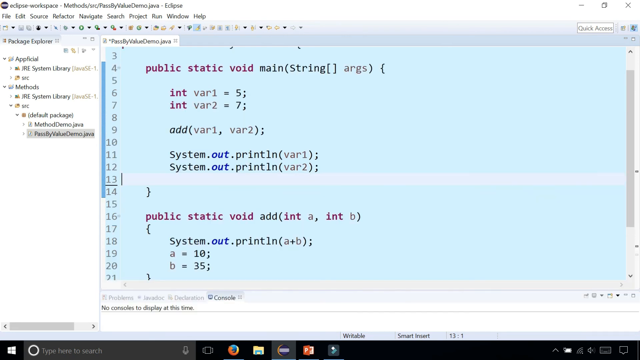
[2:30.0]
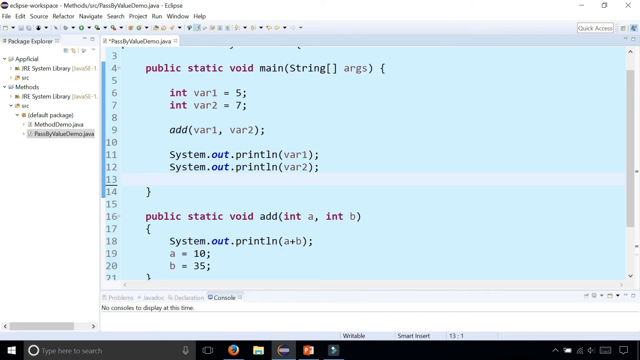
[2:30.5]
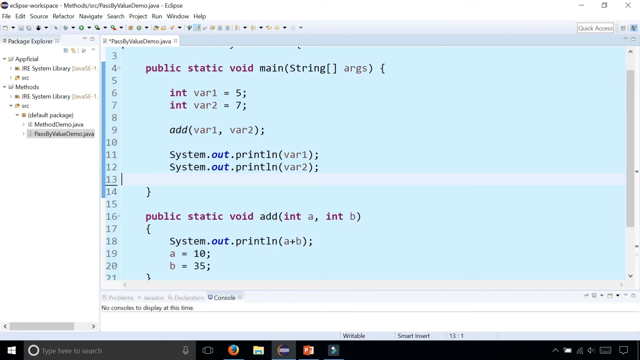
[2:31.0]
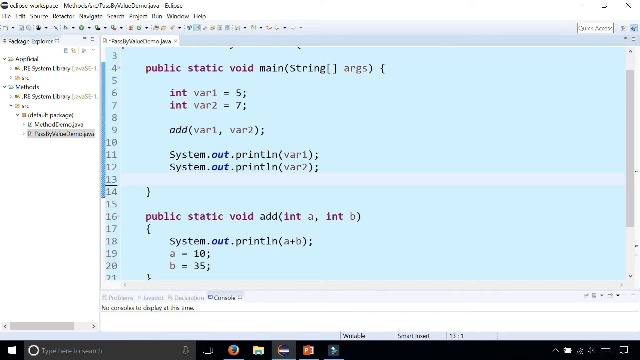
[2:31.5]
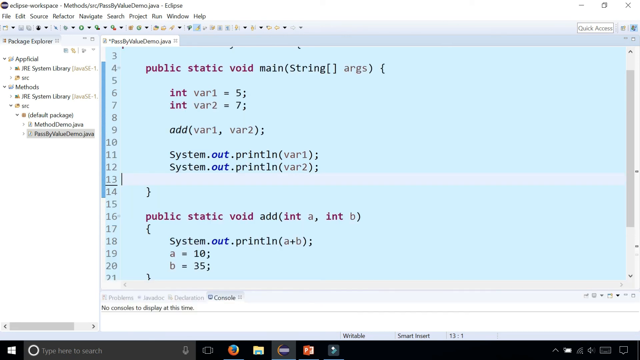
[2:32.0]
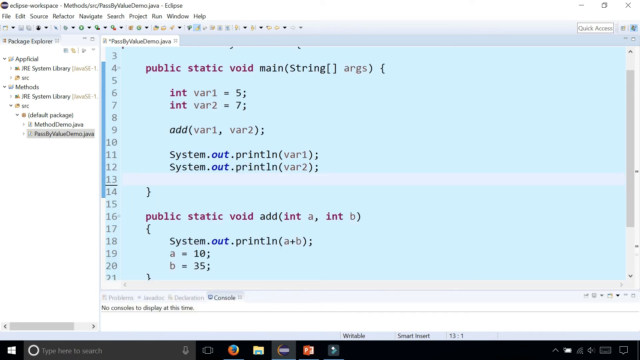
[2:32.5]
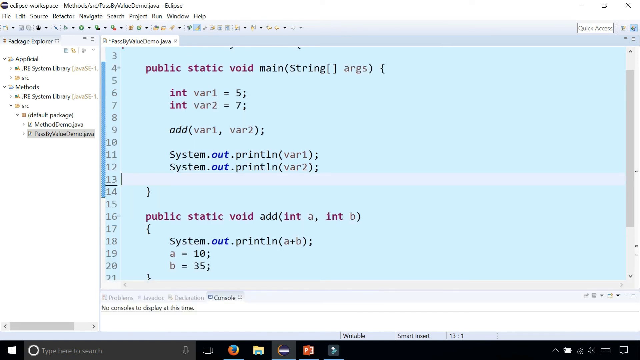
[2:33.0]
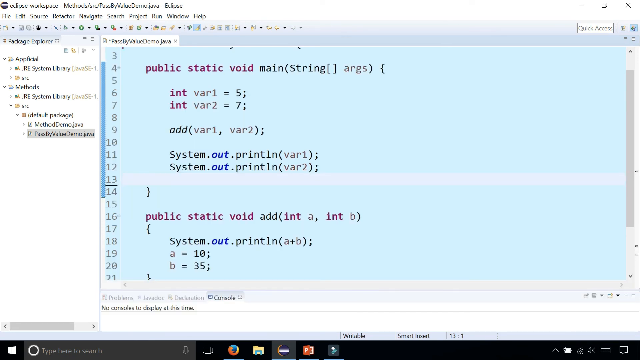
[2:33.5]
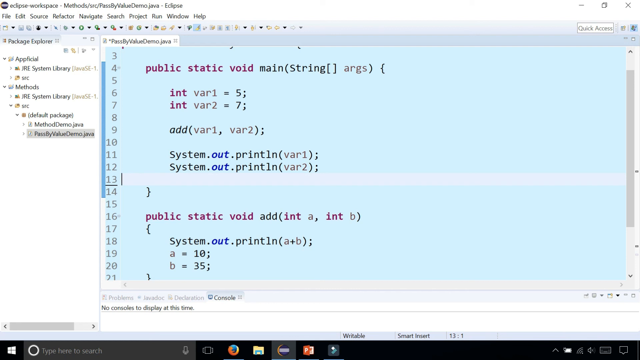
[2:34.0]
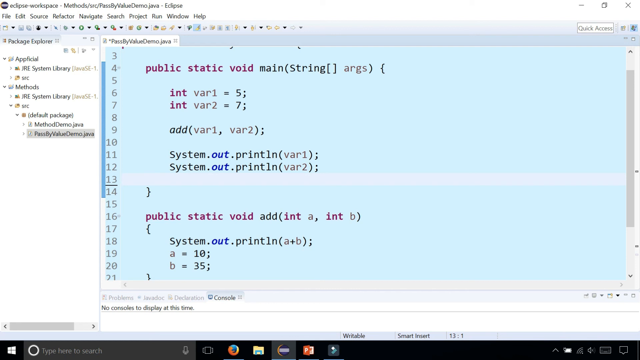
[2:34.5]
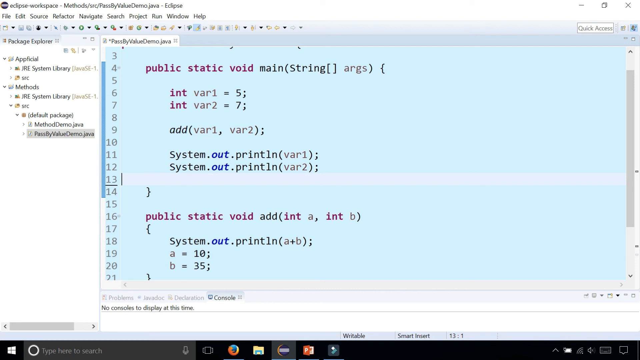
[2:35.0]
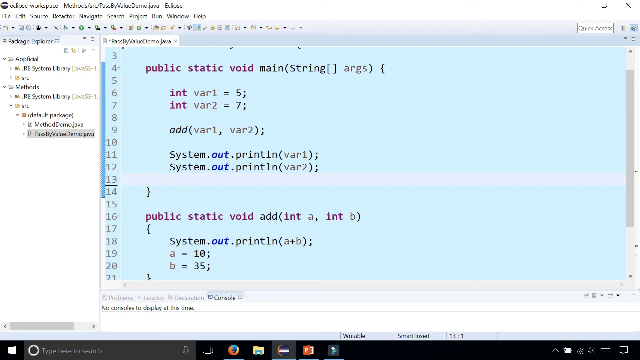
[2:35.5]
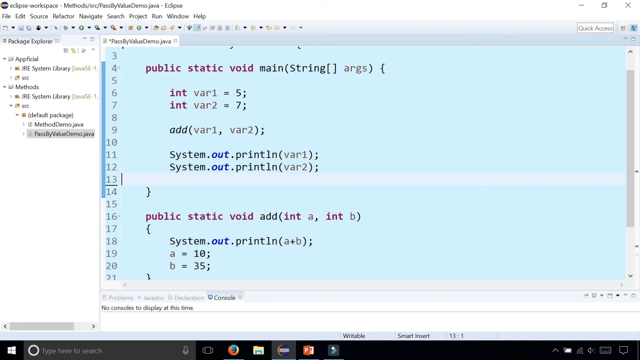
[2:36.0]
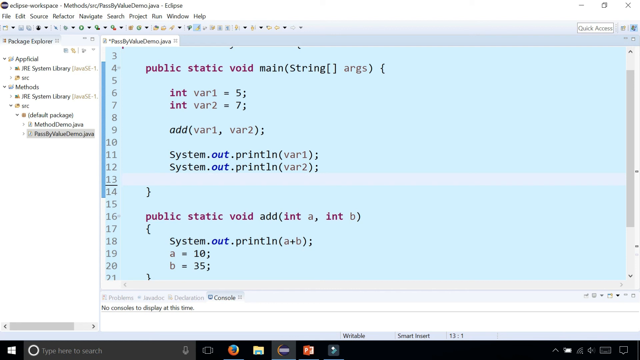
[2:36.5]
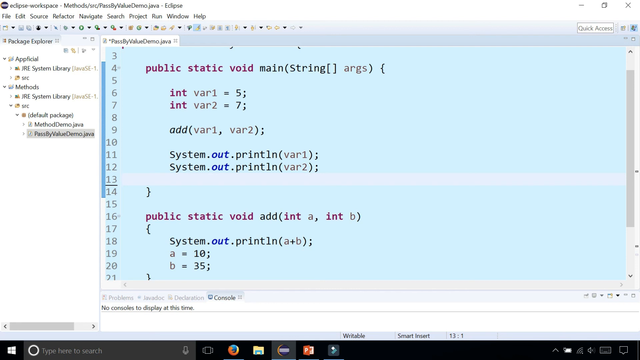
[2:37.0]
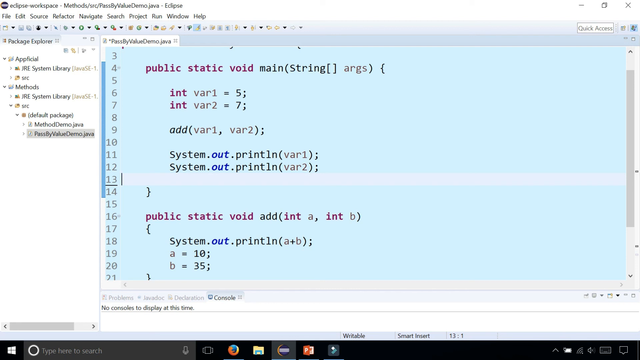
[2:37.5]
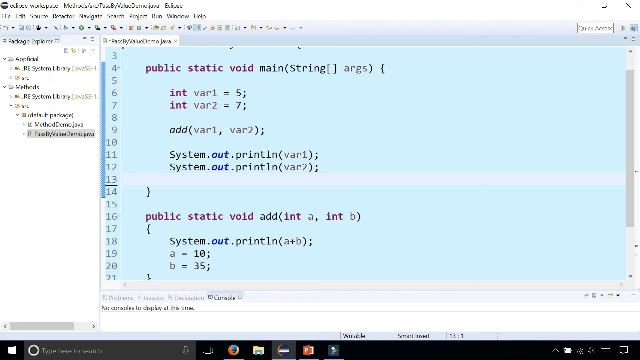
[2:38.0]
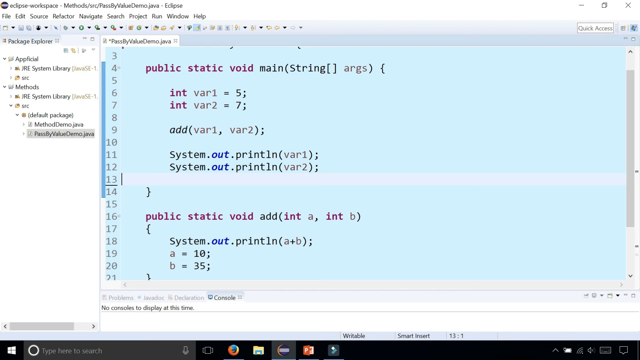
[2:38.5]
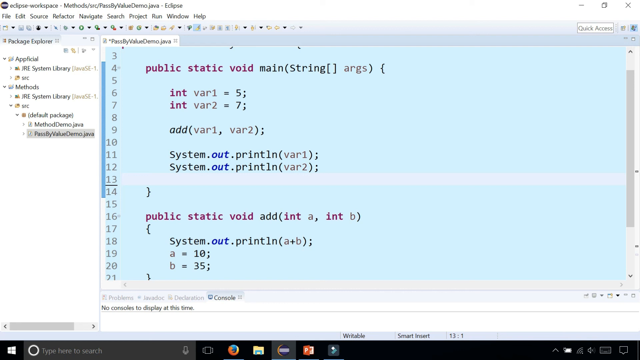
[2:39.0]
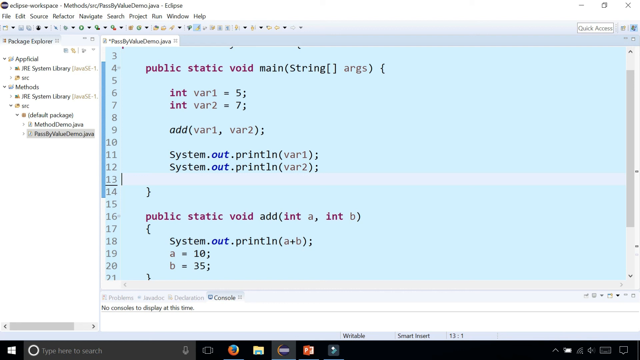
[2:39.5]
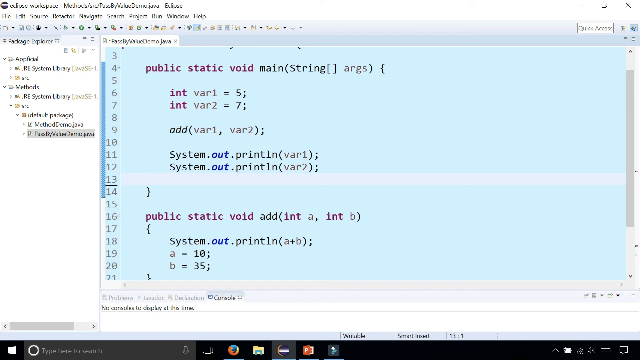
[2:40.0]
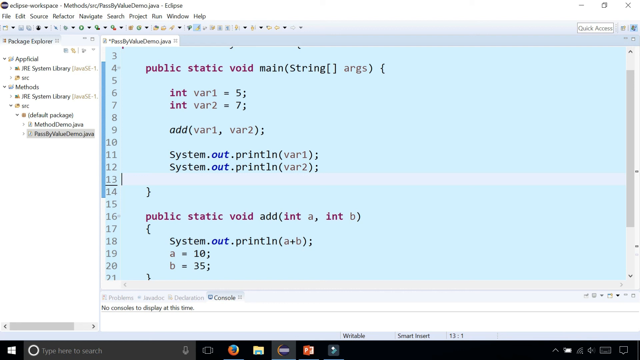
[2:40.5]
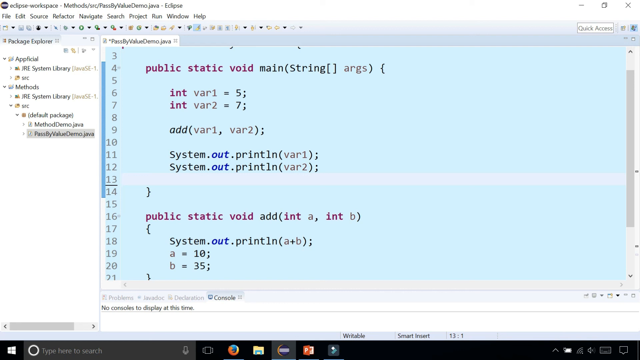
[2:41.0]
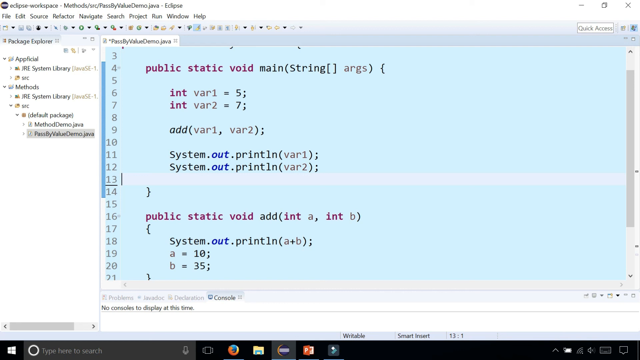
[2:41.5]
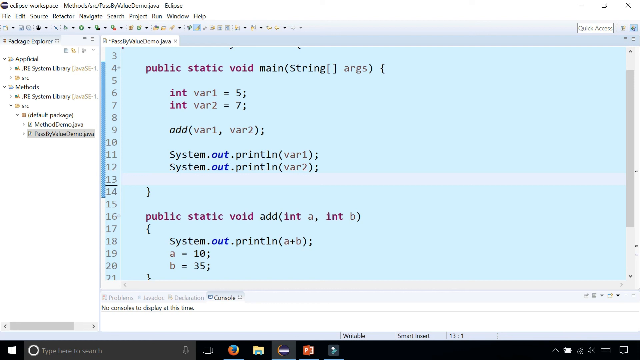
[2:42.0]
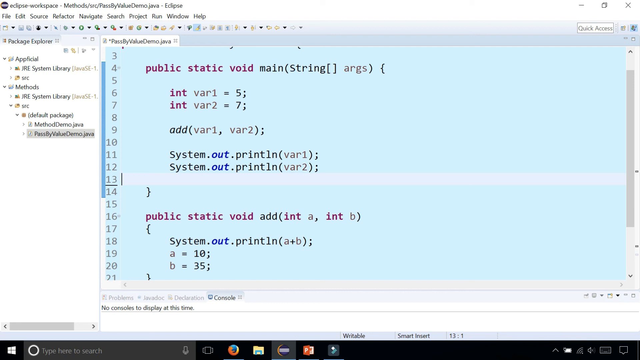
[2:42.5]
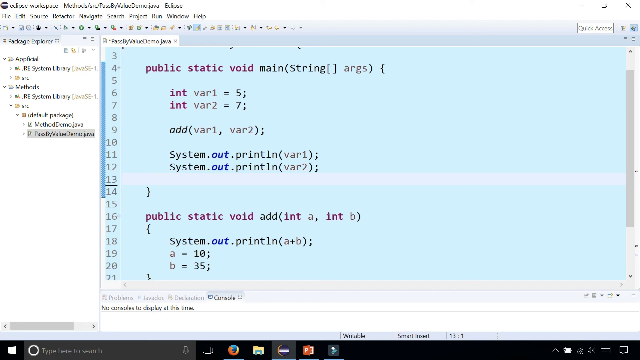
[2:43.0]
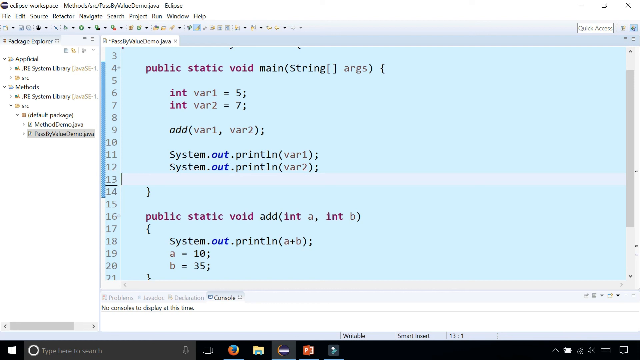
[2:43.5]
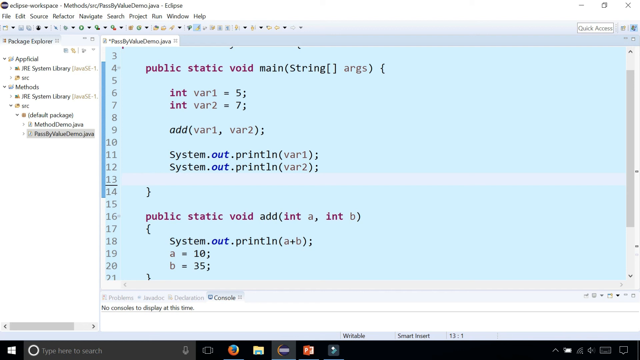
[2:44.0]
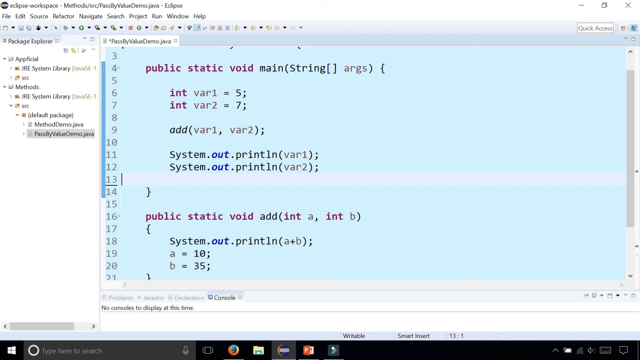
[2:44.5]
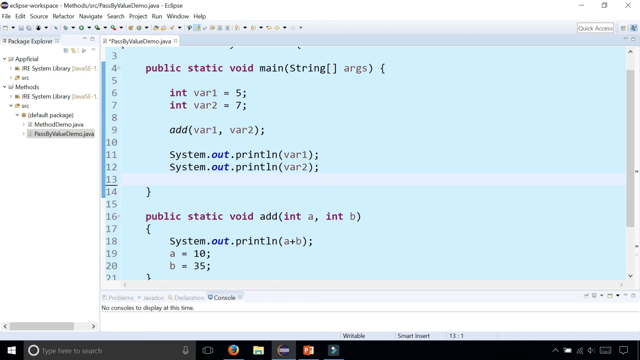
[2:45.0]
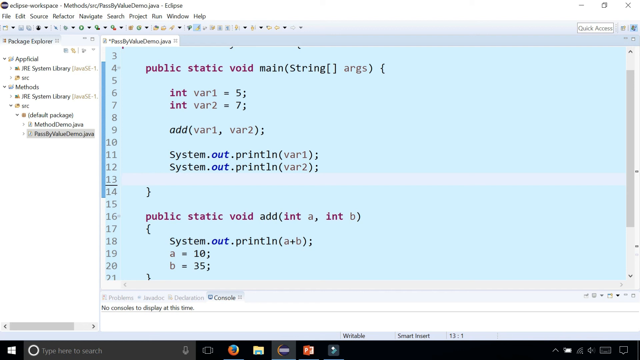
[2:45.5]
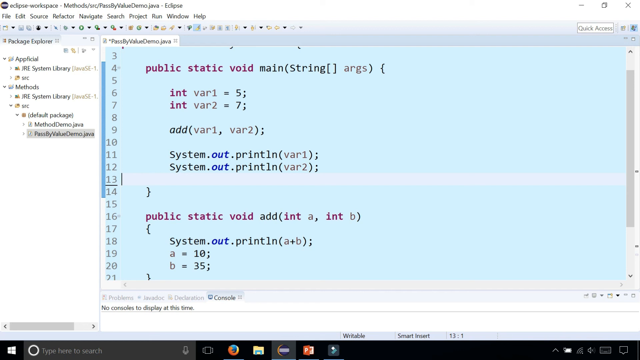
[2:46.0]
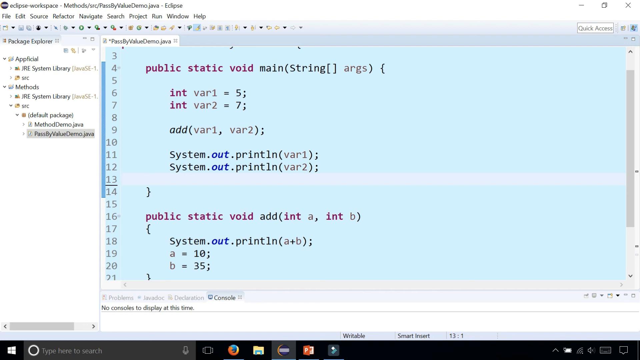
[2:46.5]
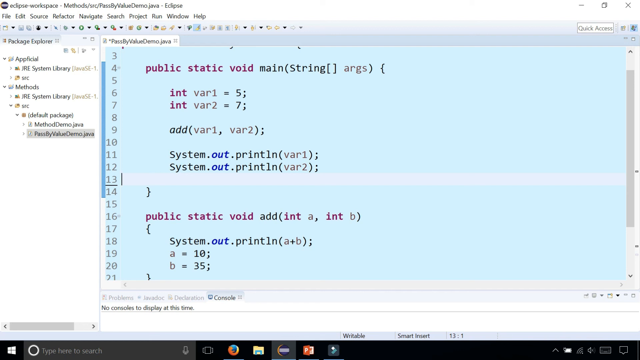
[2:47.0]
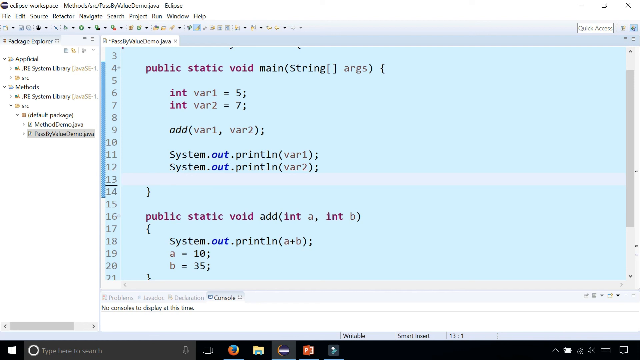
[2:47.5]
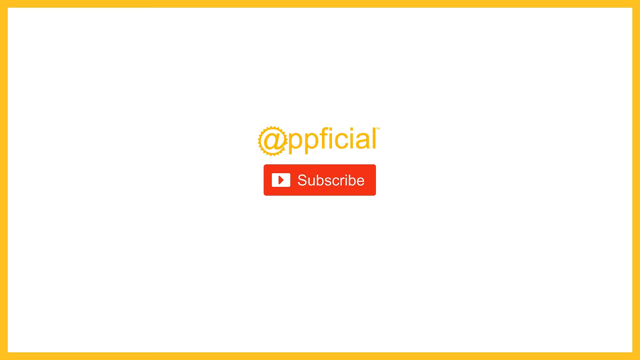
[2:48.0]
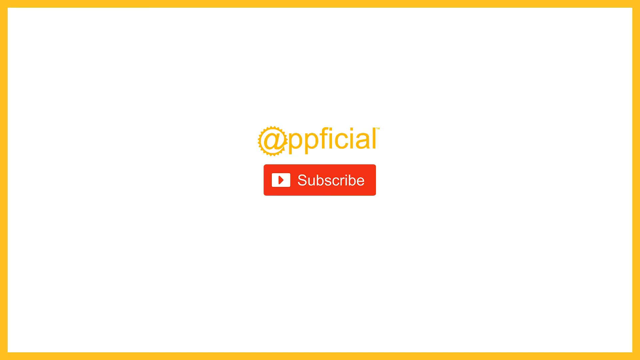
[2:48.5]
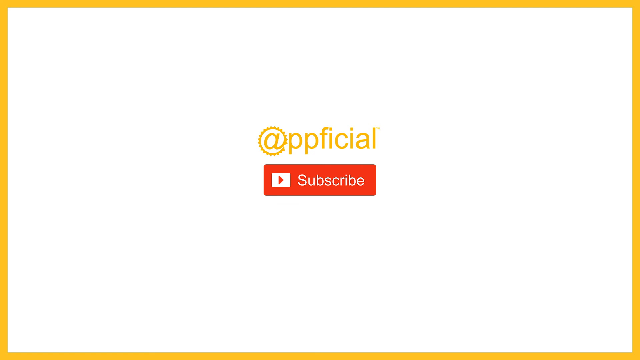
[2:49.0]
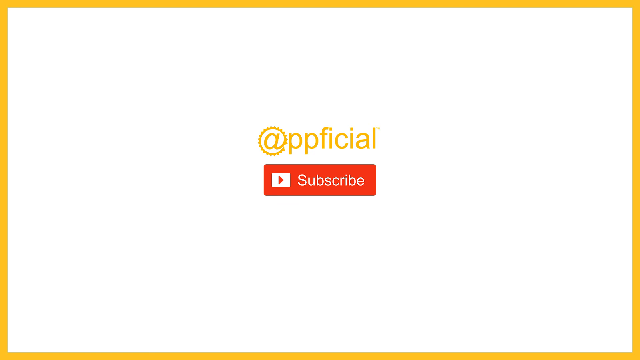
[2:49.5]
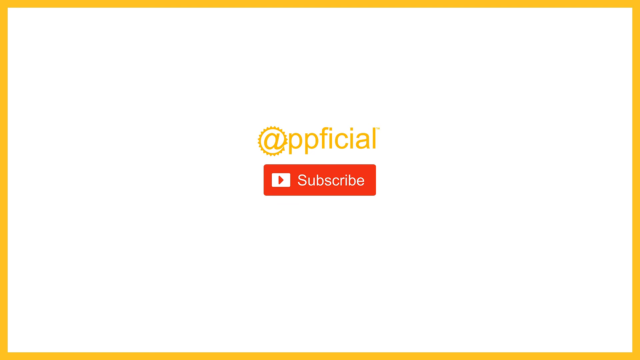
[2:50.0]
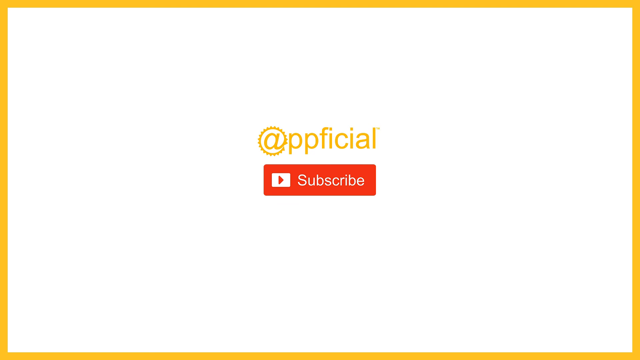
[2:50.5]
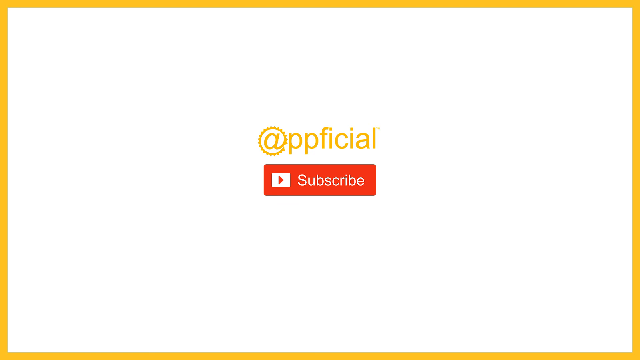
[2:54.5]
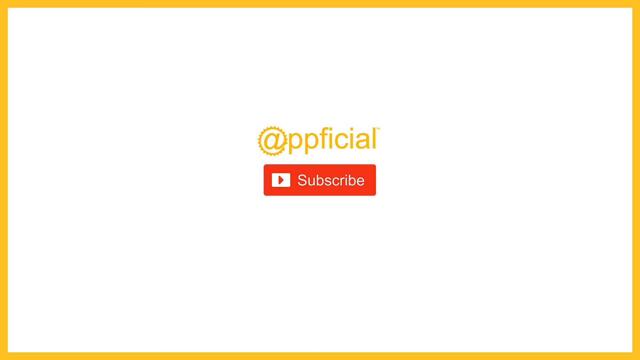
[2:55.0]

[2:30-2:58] The Eclipse Workplace program screen shows something to do with Java. A typical menu runs across the top (File, Edit, Source, Refactor, Navigate, Search, Project, Run, Window, Help), and a menu tree on the left lists Package Explorer, JRE System Library, Default Package, MethodDemo.java and PassByValueDemo.java, among other items. The work screen in the middle has a green background, with code typed along vertically numbered lines, including words such as public static void, main string and System.out.println. Someone types in line 13, where their cursor is. The video then goes to a final screen that reads "app official," with a YouTube subscribe button. The background is white, with a yellow border around the sides and top but not the bottom.